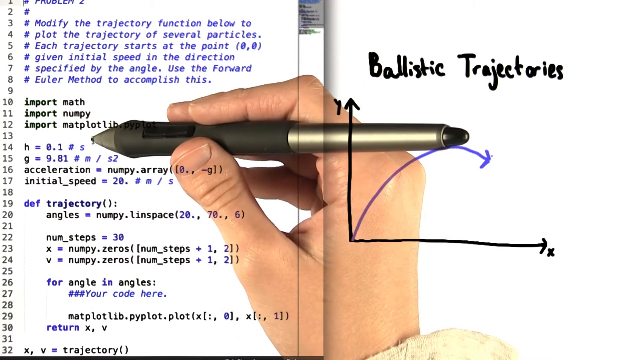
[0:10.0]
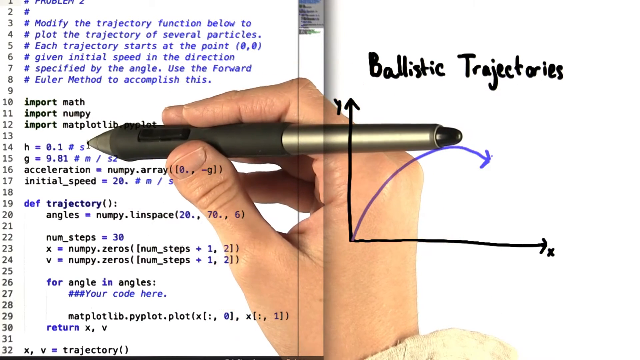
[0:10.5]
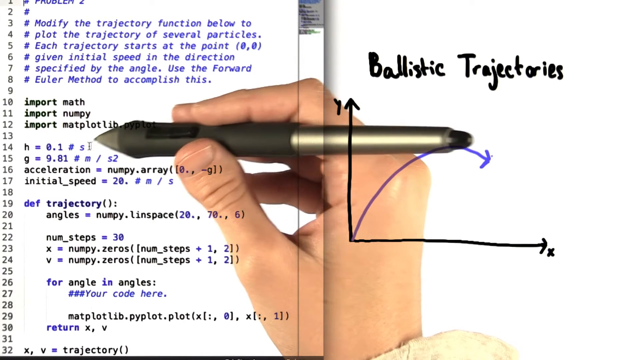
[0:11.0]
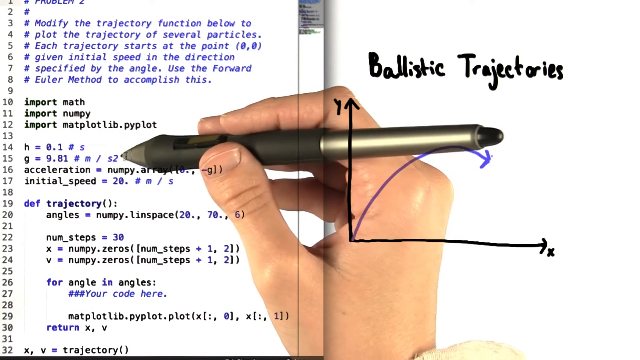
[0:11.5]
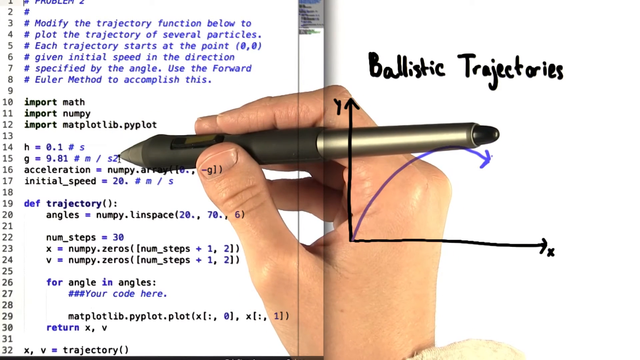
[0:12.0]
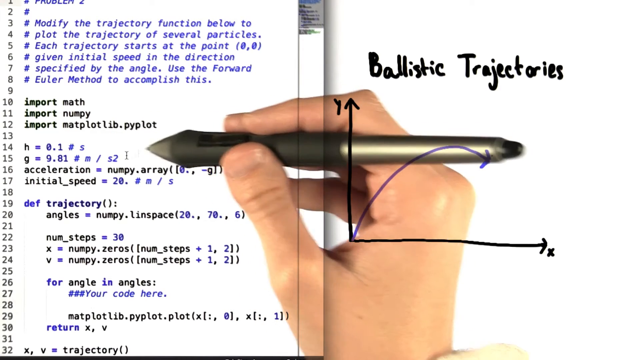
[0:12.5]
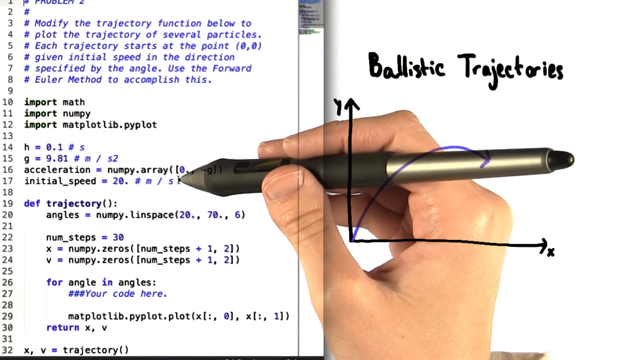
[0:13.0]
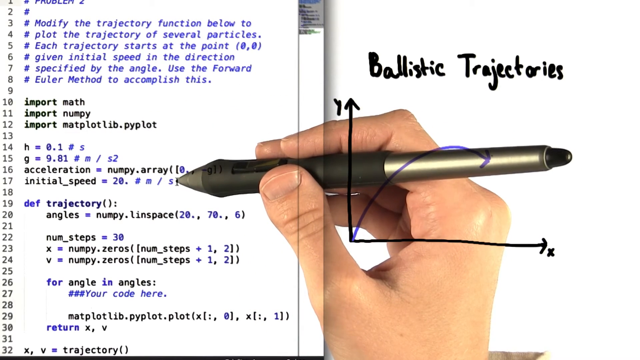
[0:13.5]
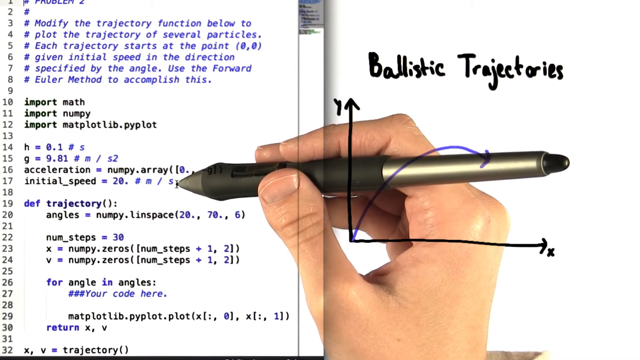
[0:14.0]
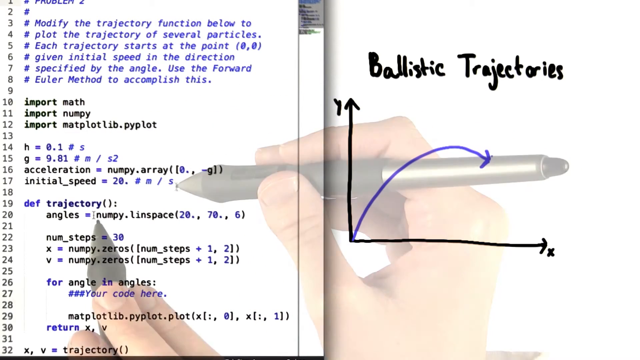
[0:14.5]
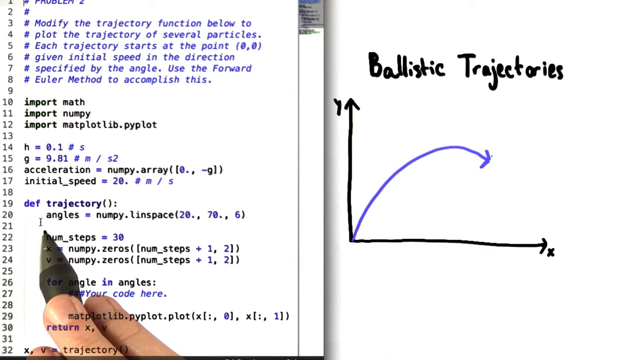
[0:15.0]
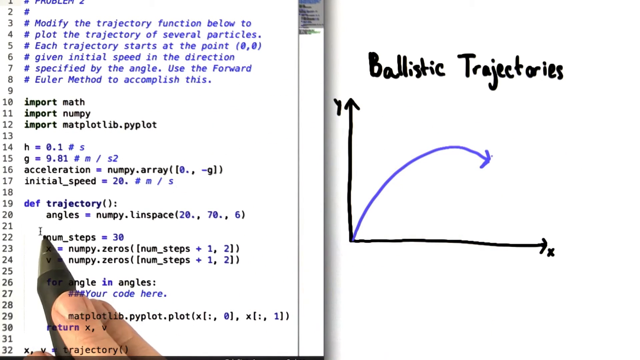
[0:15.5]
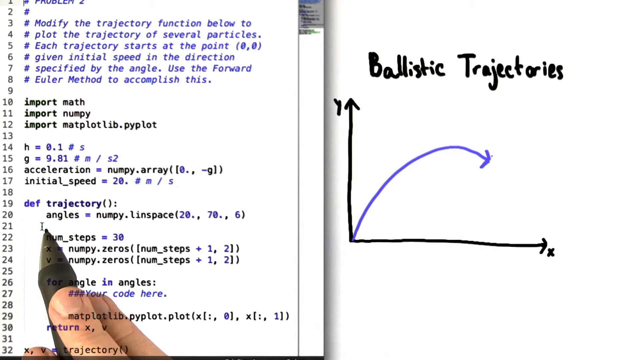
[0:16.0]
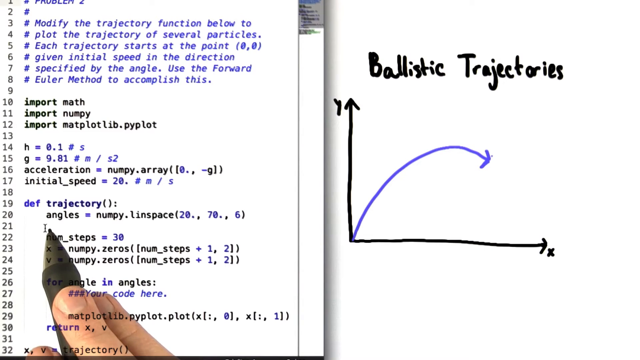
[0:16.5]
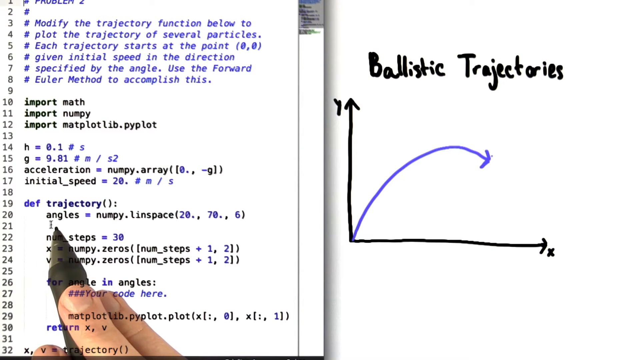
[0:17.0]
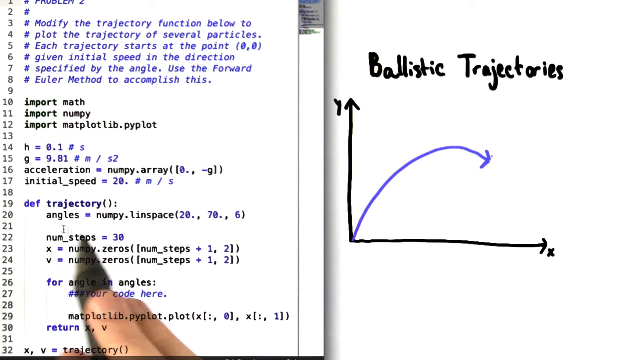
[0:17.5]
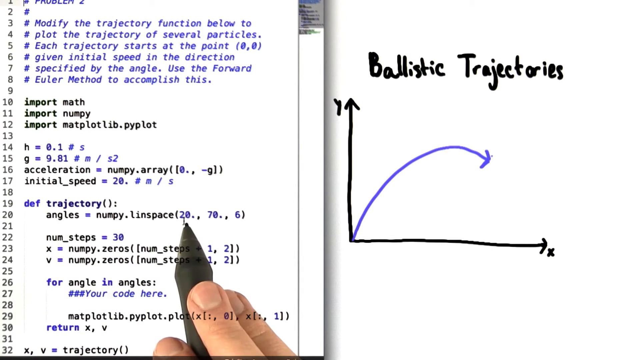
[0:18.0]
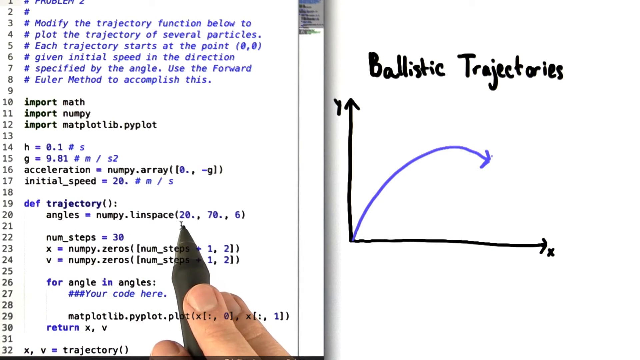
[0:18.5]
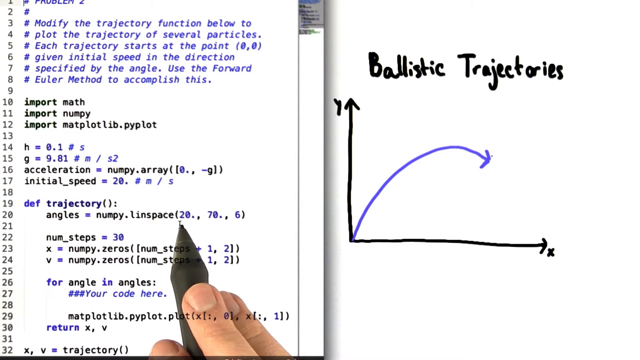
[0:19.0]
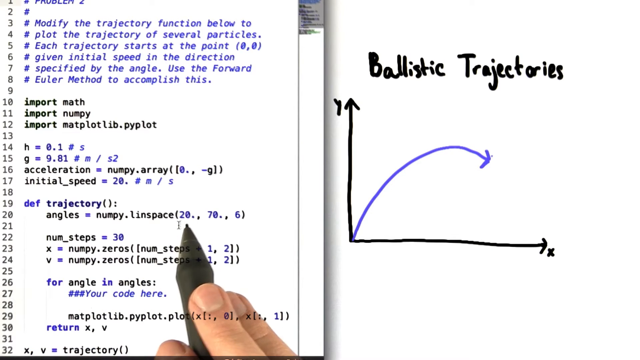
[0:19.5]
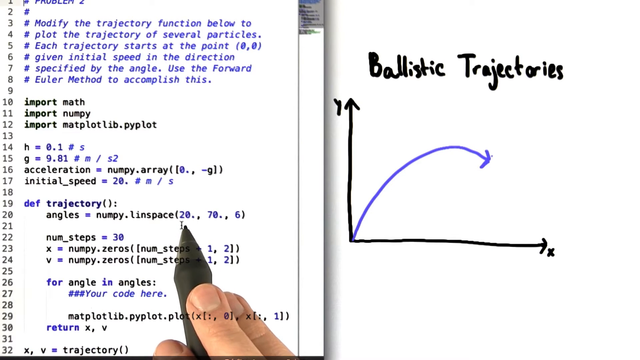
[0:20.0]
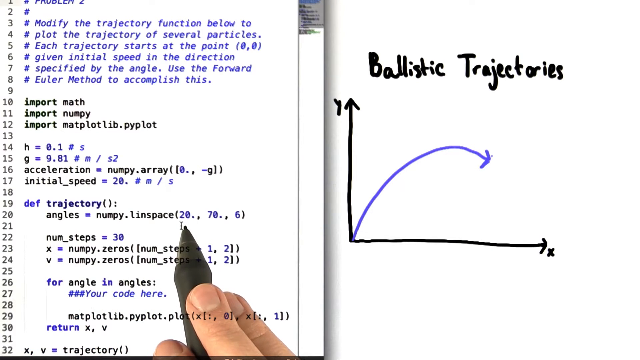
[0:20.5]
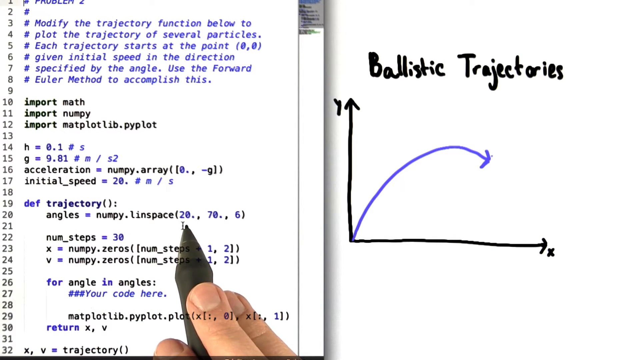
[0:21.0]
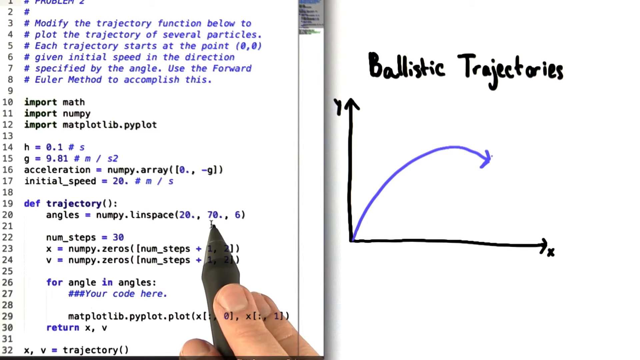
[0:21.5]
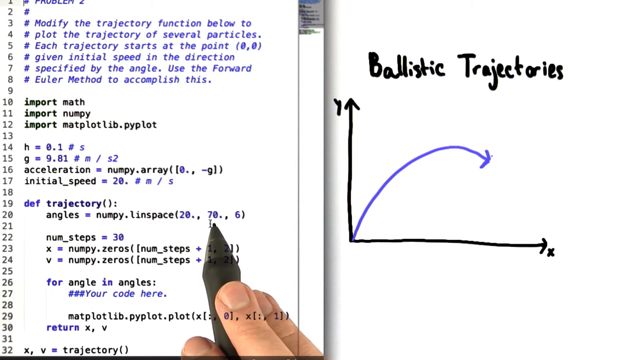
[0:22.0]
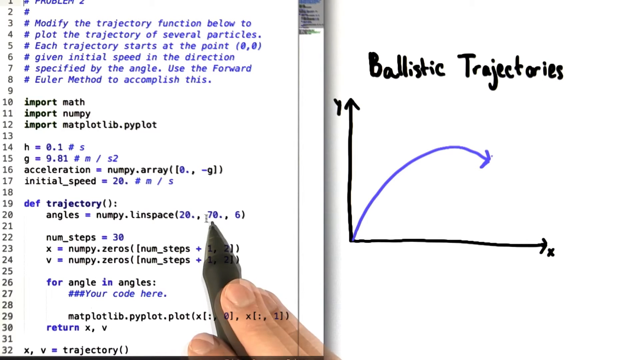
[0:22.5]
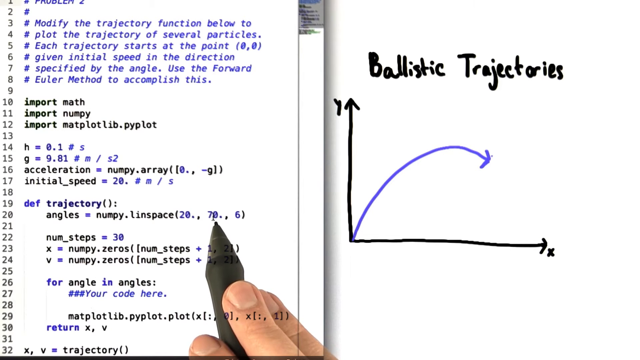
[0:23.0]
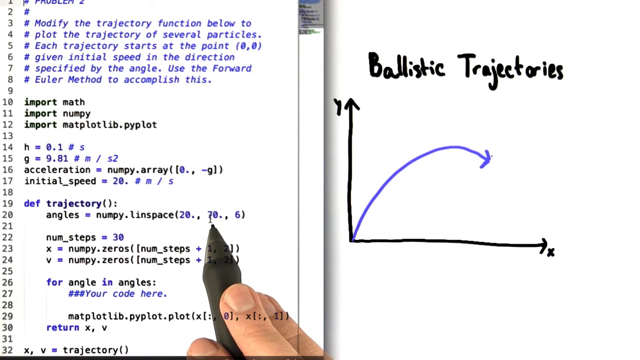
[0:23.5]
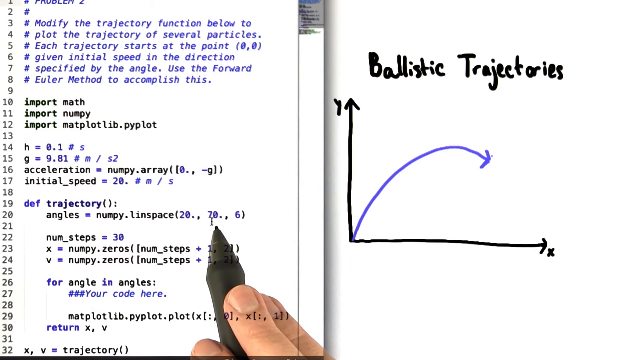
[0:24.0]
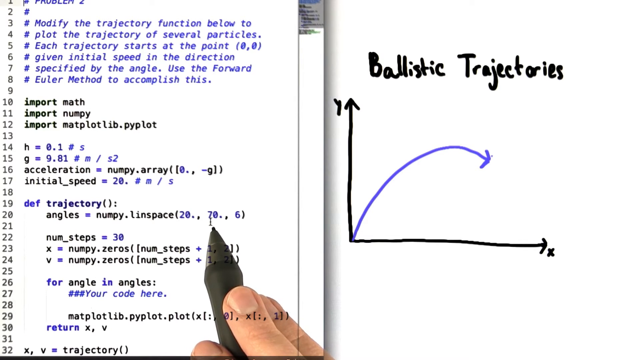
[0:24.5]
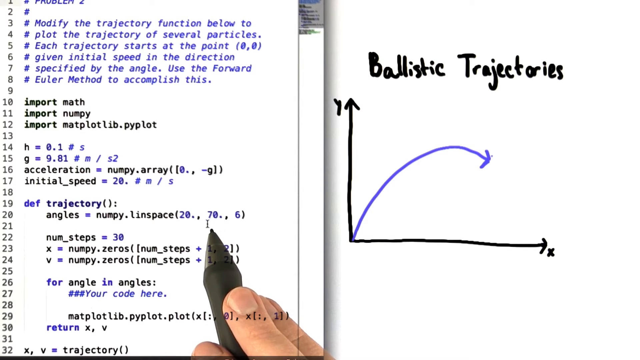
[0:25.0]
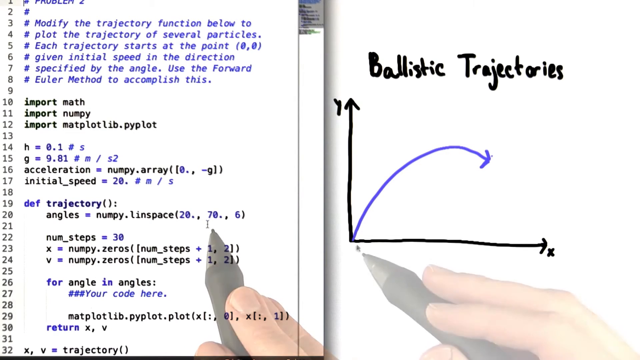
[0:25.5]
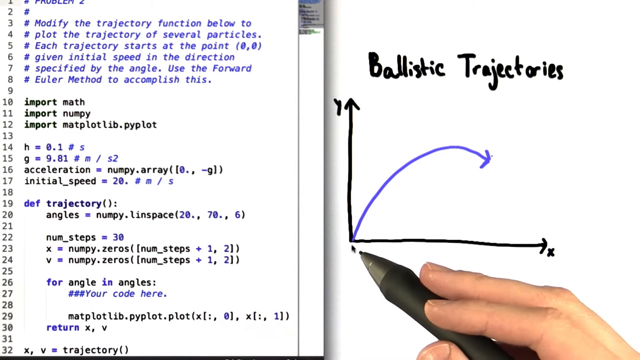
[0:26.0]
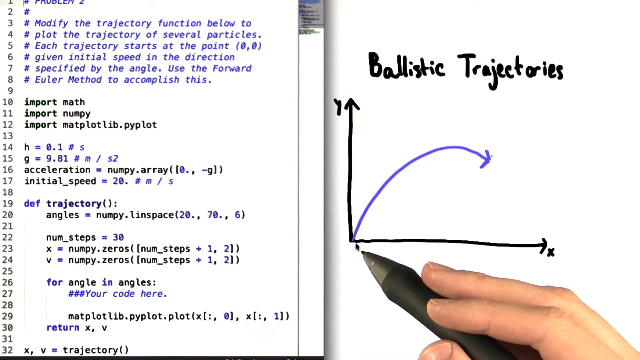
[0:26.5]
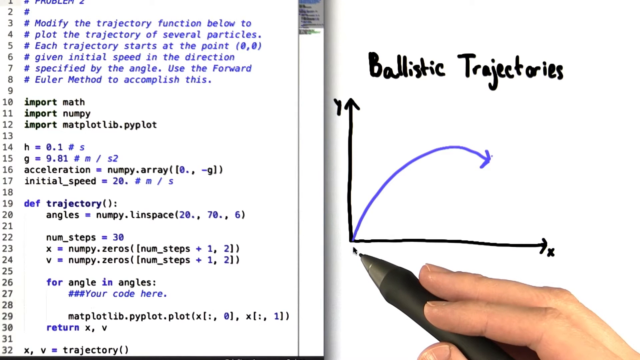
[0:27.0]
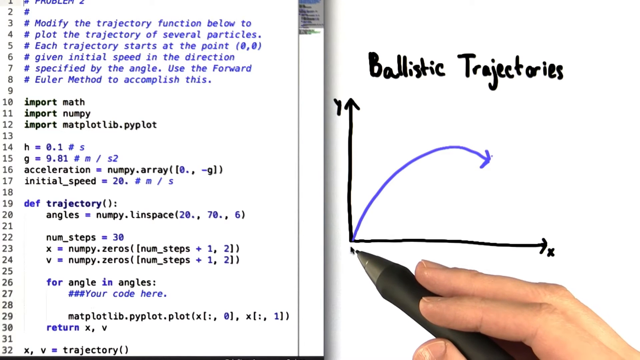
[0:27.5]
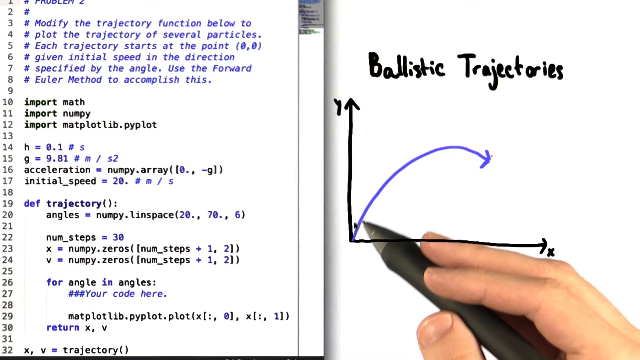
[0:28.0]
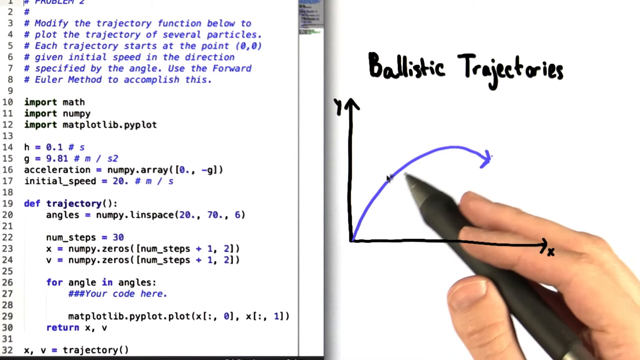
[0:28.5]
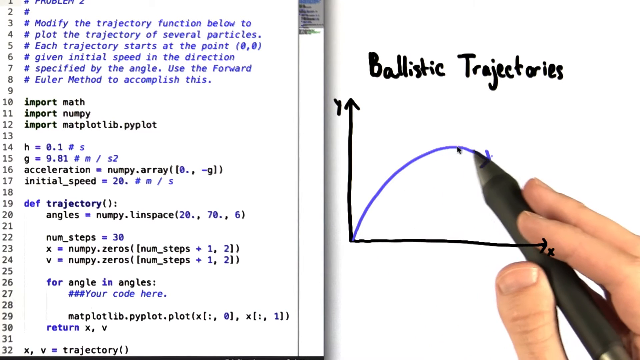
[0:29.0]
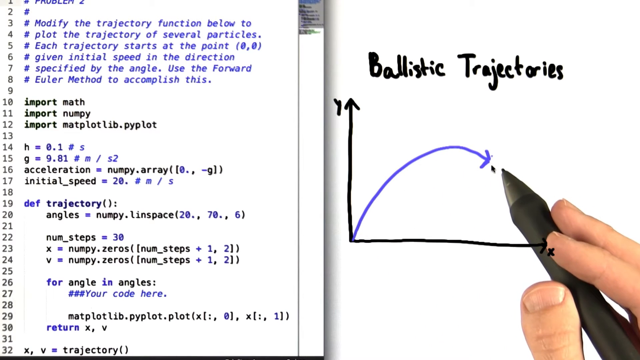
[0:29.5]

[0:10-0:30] A person records their right hand gripping a digital pen with the middle finger, index finger and thumb over a white surface. Superimposed in the foreground is the screen they are looking at and working on with the smart pen. On the right side, the screen reads "ballistic trajectories" and shows a graph with a Y and X axis and a purple line starting where the axes meet, rising toward Y and then curving downward toward X. On the left side is a series of code meant to calculate ballistic trajectories. Using the smart pen, they point to various lines of code: first a line reading "def trajectory", then, moving the mouse cursor with the tip of the pen, a line underneath it reading "angles equals numpy". They point to a space below, then move the pen to a line with numbers, pointing to the number 20 and the number 70. They then move the pen to the graph on the right and follow the purple line along its arc.